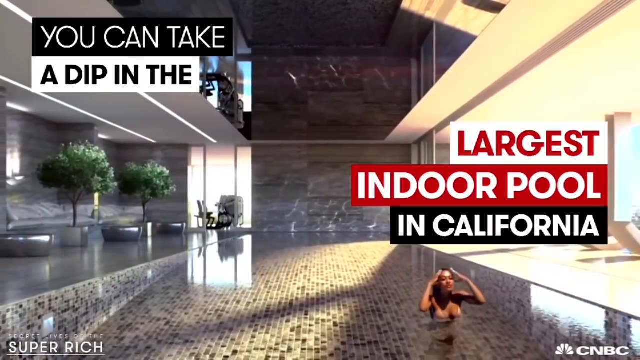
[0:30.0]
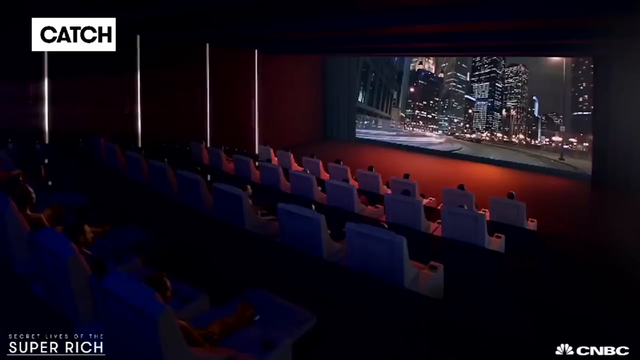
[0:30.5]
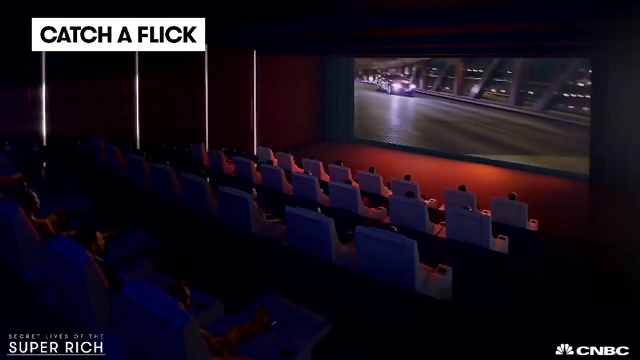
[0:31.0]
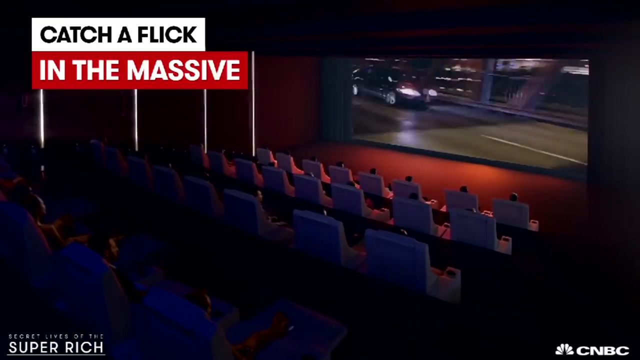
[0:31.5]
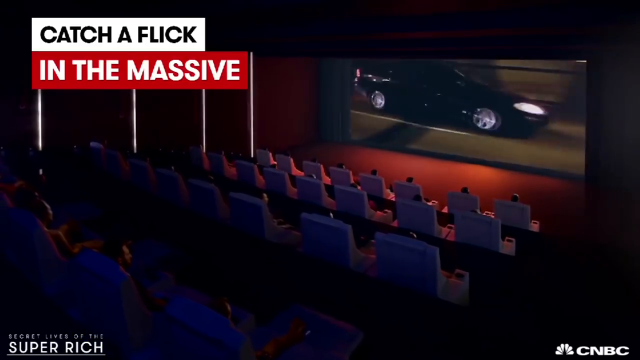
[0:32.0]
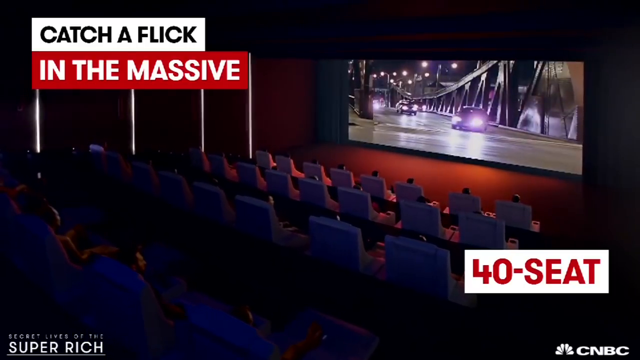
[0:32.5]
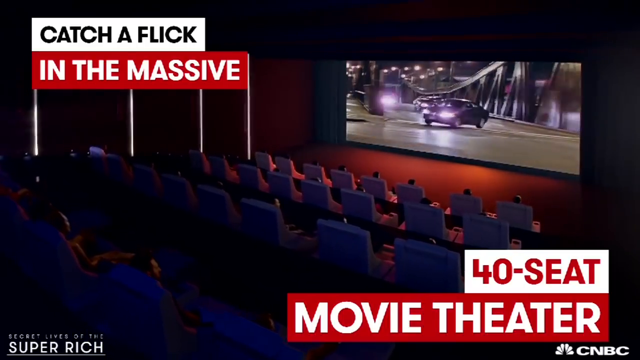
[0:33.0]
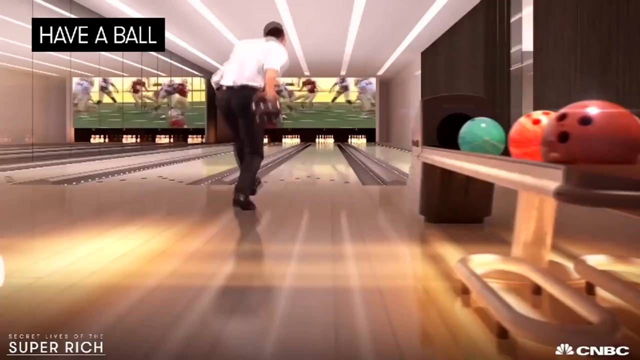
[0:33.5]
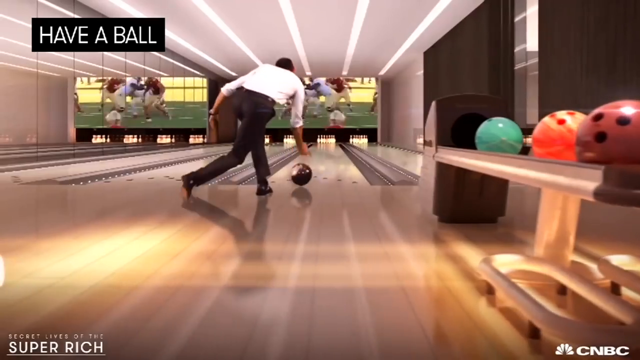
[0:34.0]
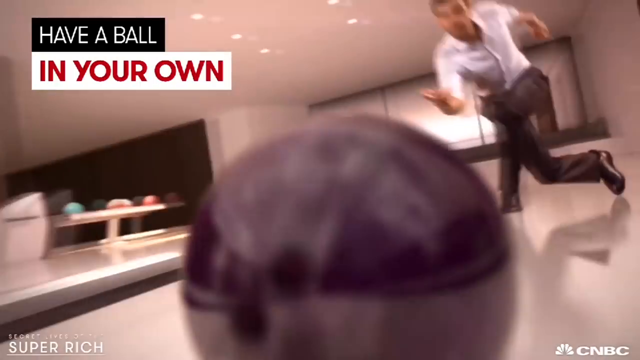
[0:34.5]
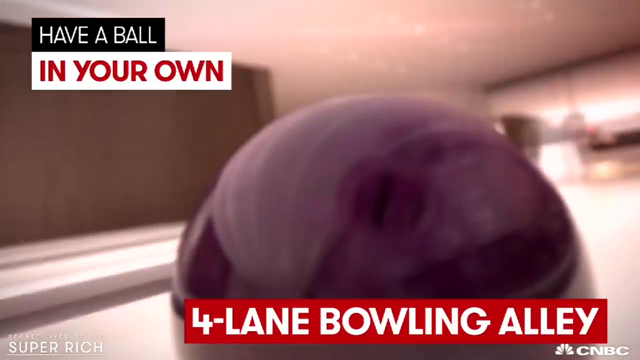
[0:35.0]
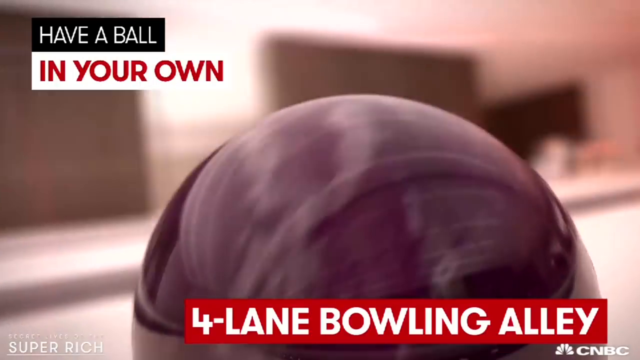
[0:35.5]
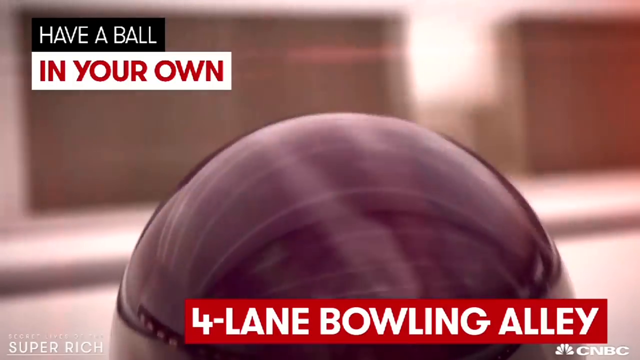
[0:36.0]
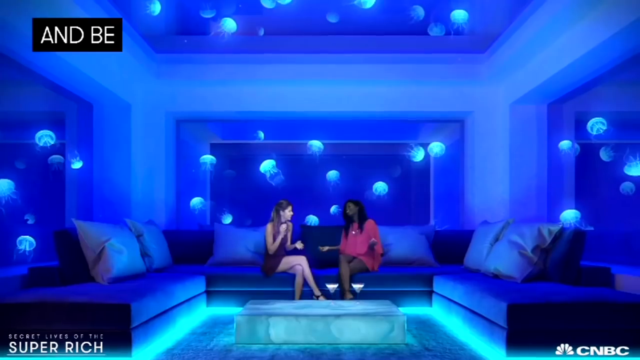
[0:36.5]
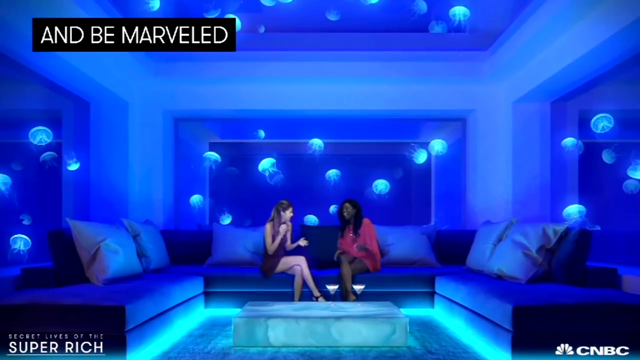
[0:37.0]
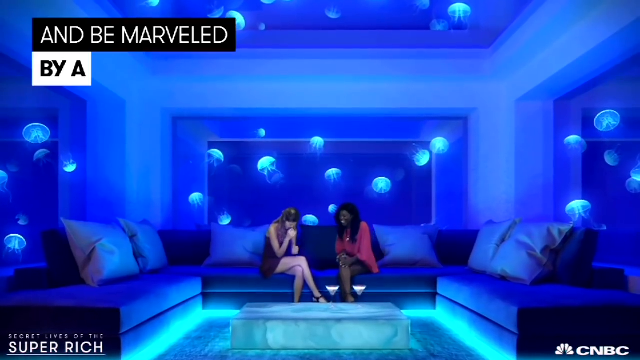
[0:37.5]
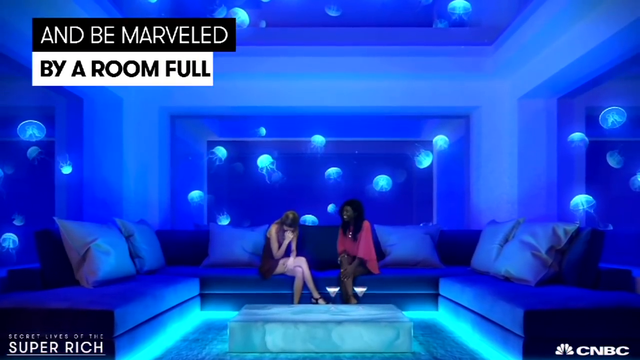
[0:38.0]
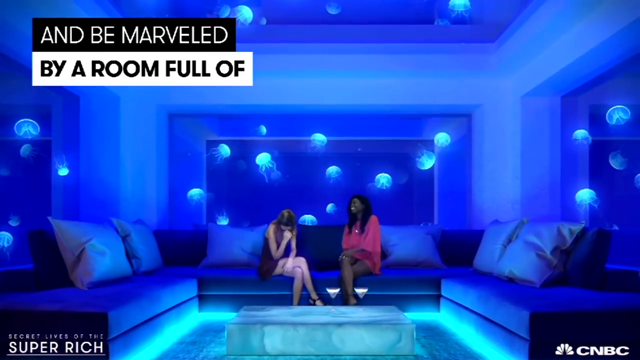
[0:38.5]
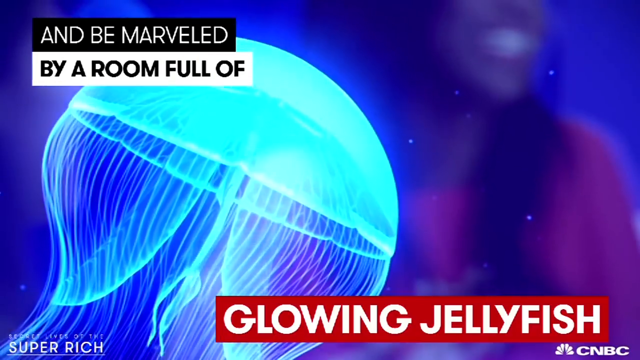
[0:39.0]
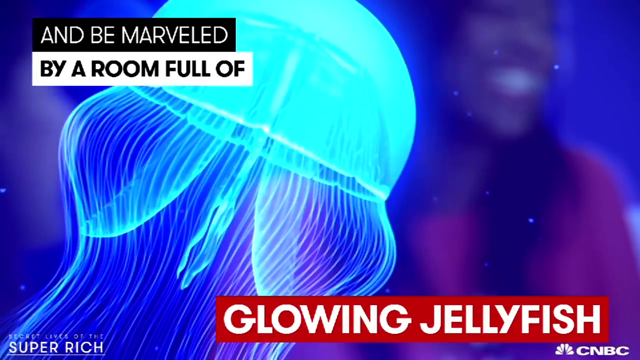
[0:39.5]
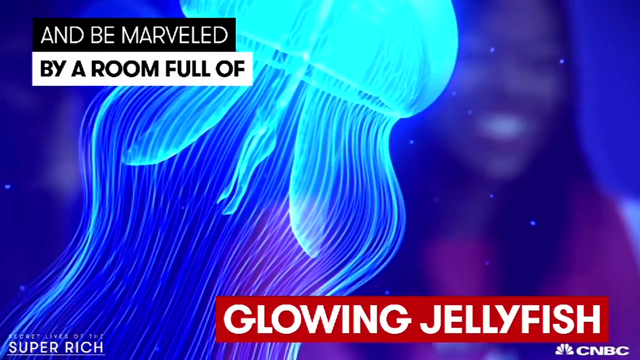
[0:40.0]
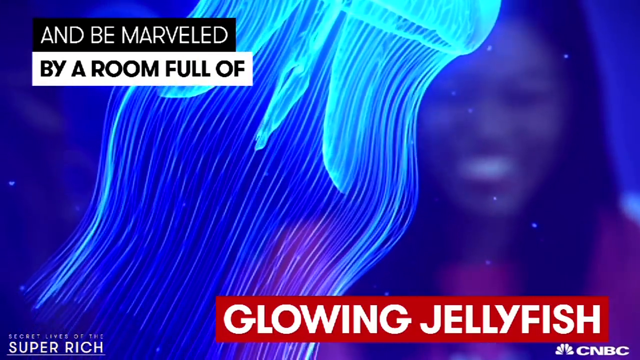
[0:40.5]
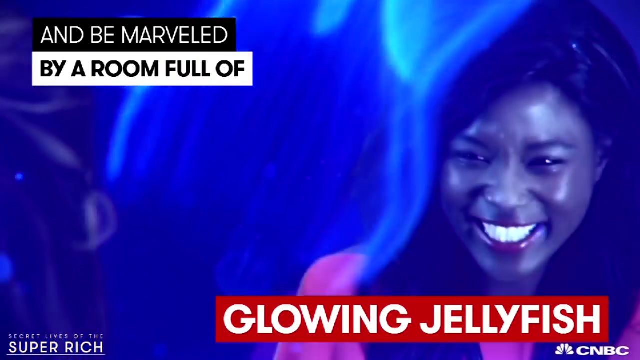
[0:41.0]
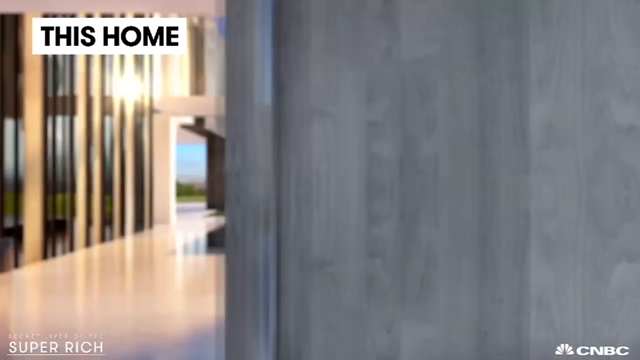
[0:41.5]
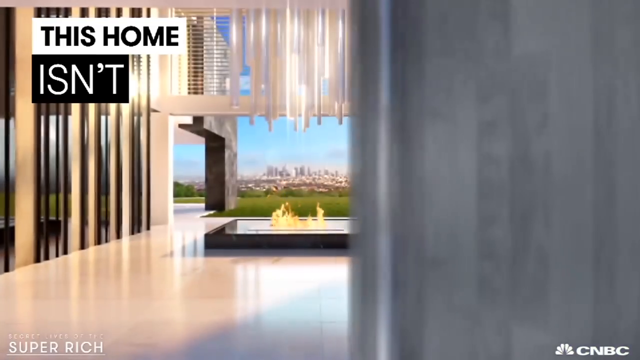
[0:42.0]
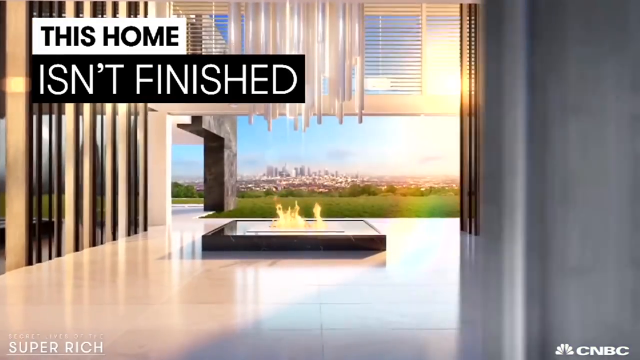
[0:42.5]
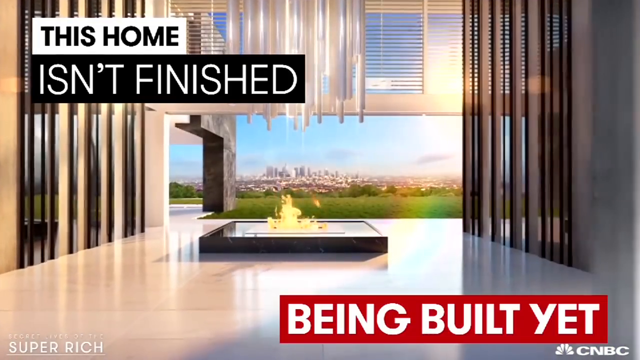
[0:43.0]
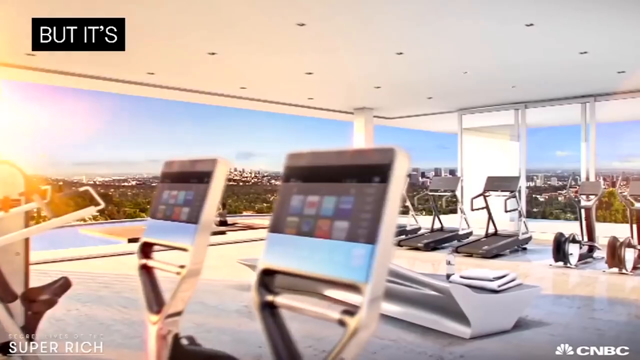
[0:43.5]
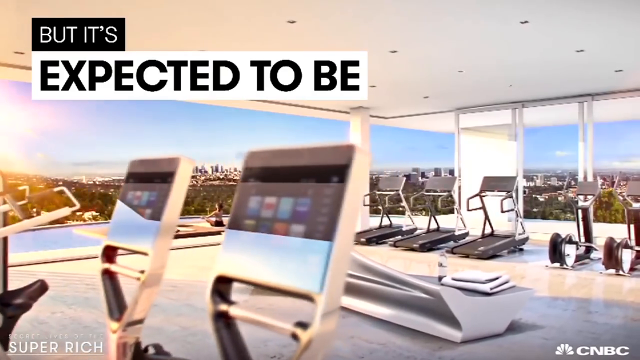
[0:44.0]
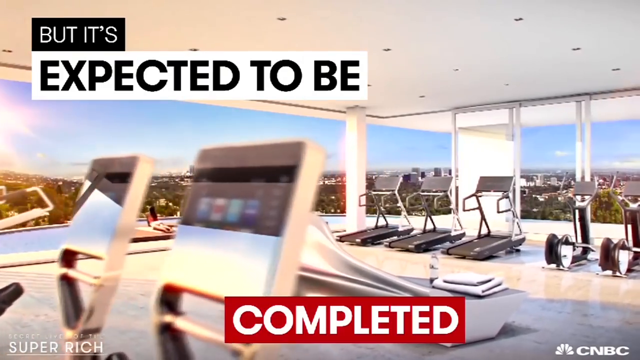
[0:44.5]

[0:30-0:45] The home has a 40-seat movie theater, a room full of glowing jellyfish, a very large fireplace, and a very large fitness center. A bowling alley with four lanes is shown. Each scene shows multiple people, and the place looks more like a resort than a home. Text on the screen says the home is not completely built yet and that these are the things that will be in it when it is finished.